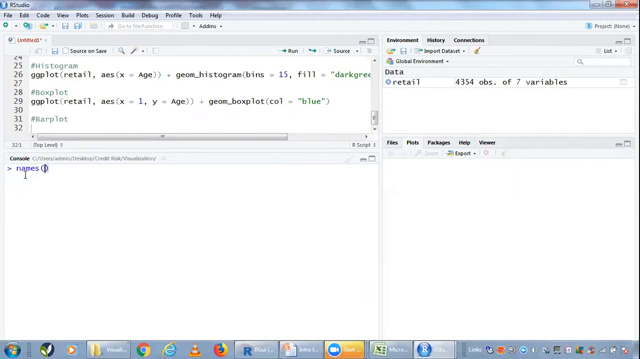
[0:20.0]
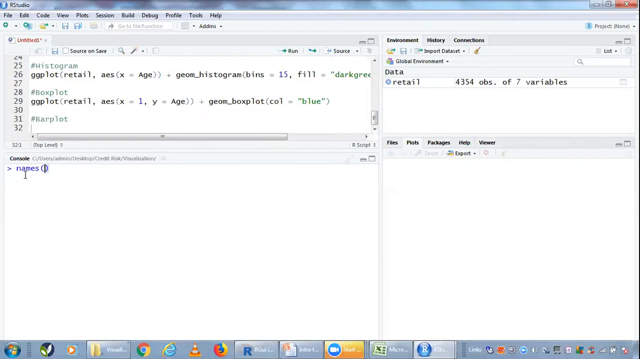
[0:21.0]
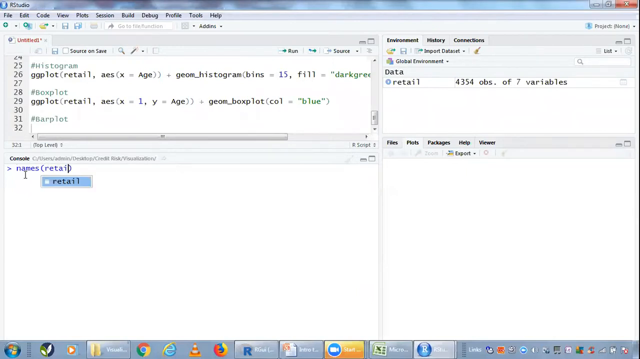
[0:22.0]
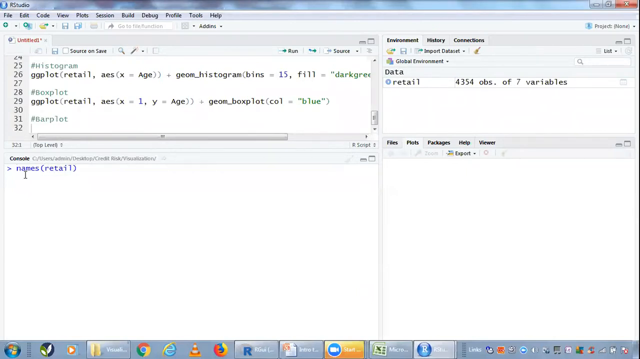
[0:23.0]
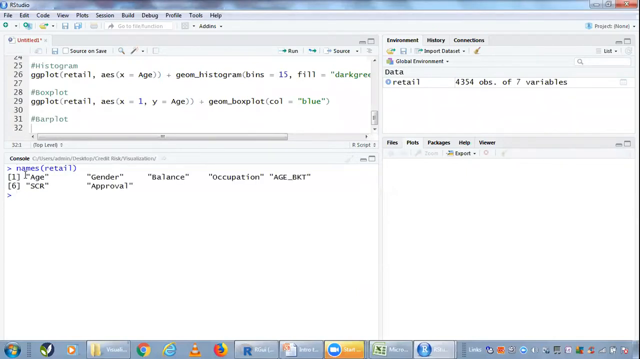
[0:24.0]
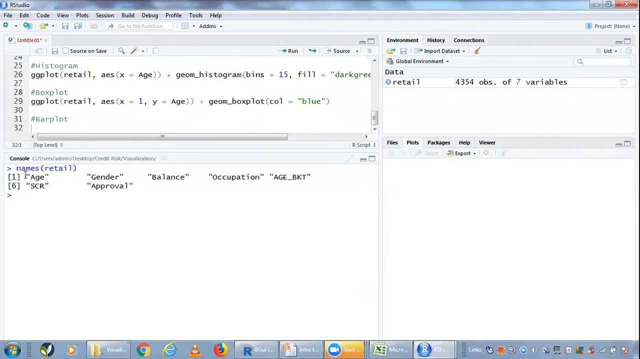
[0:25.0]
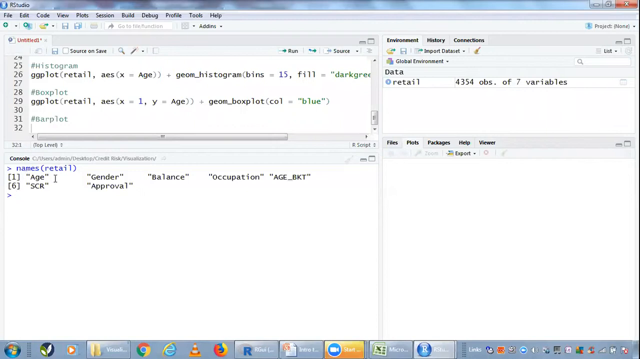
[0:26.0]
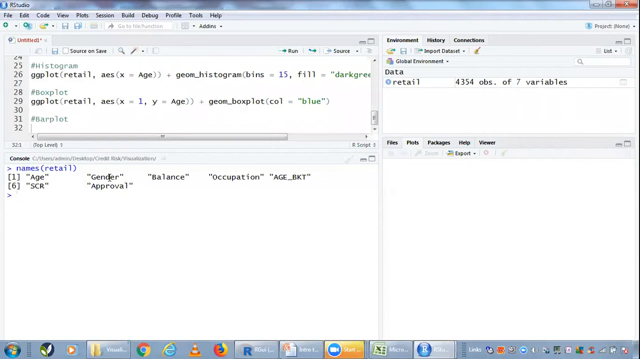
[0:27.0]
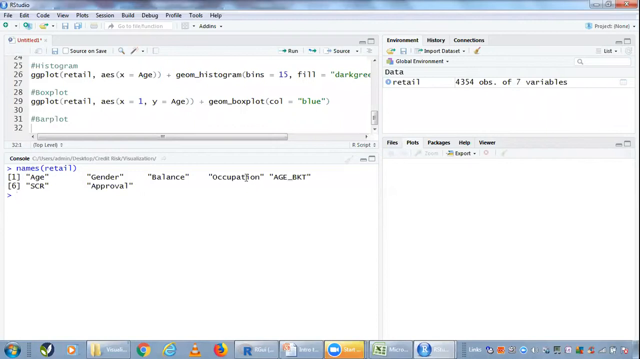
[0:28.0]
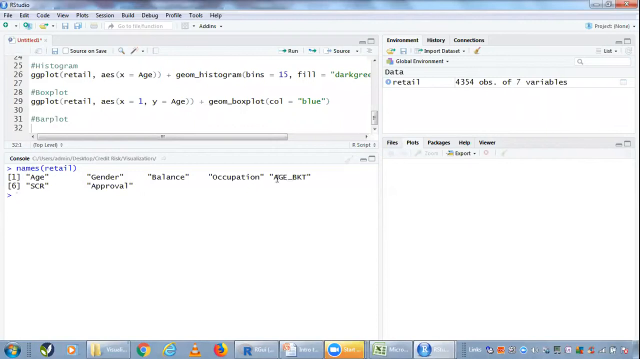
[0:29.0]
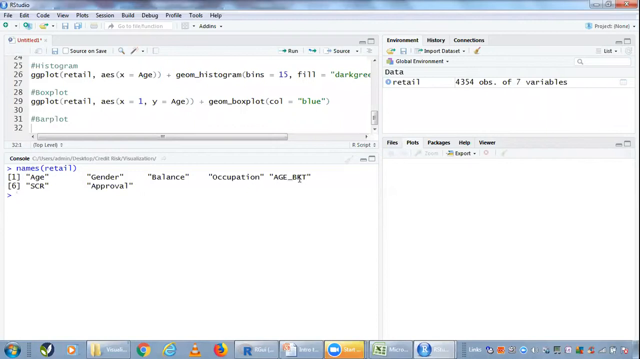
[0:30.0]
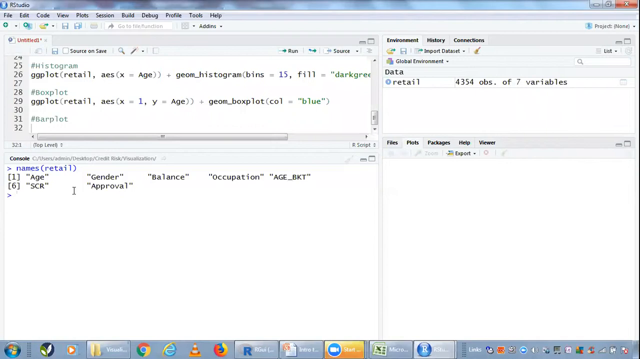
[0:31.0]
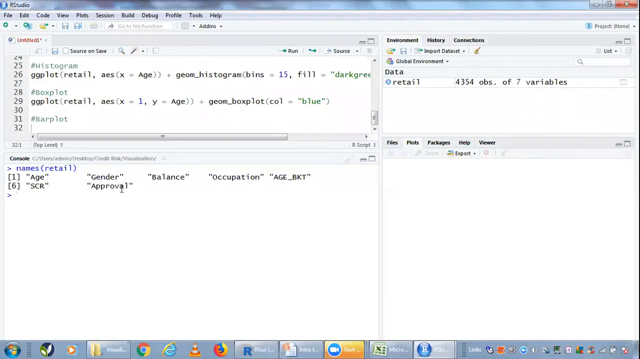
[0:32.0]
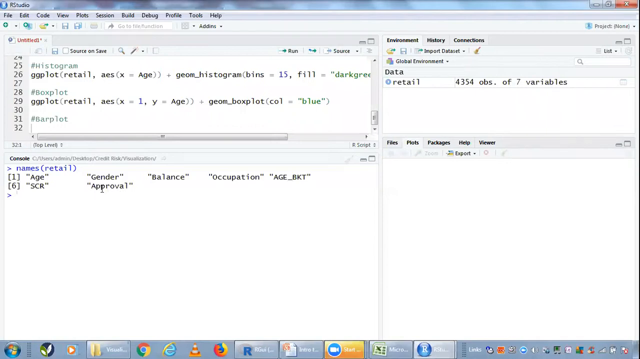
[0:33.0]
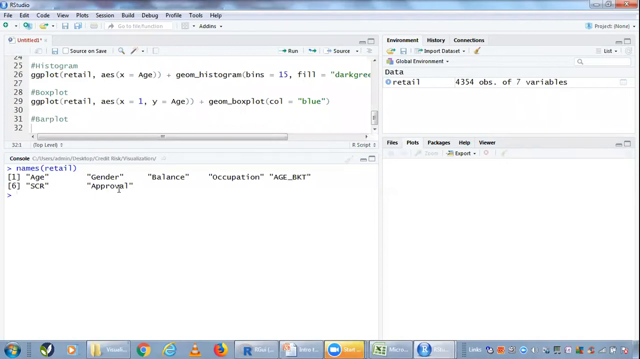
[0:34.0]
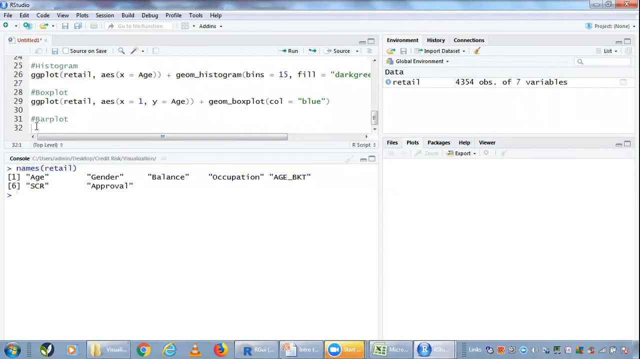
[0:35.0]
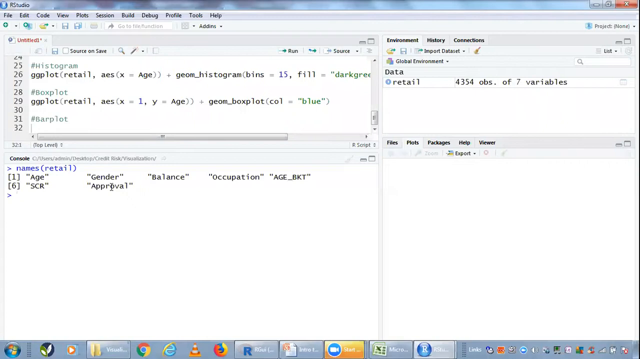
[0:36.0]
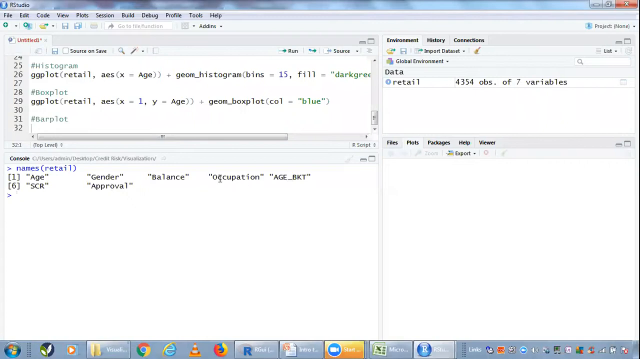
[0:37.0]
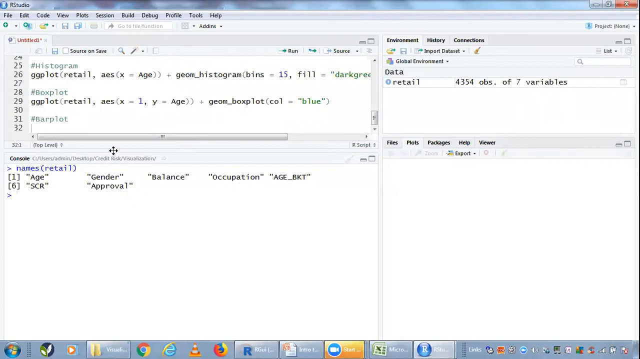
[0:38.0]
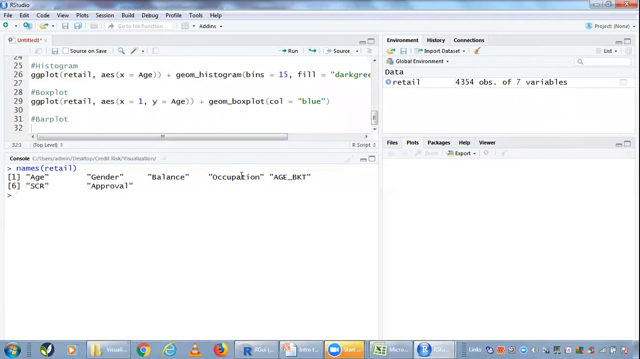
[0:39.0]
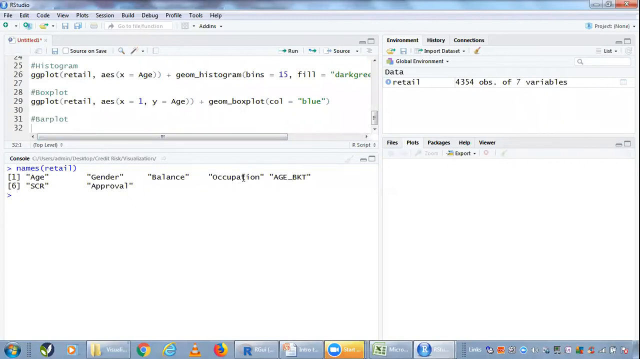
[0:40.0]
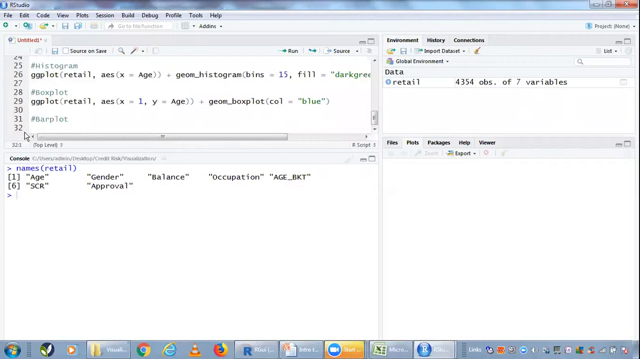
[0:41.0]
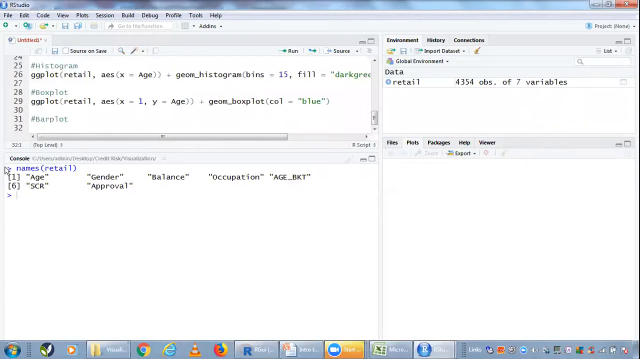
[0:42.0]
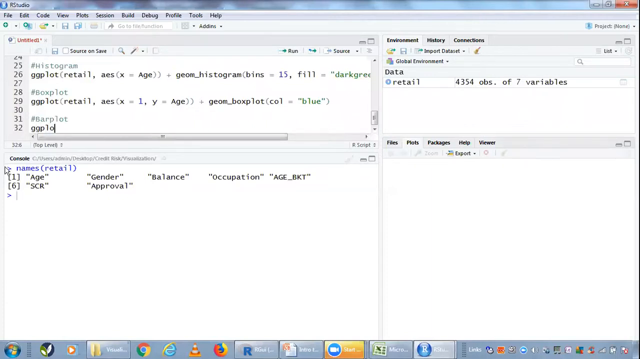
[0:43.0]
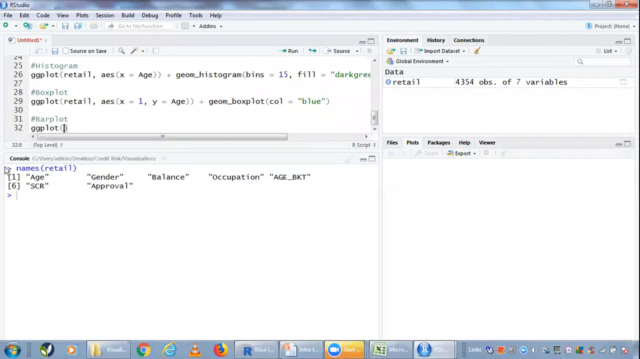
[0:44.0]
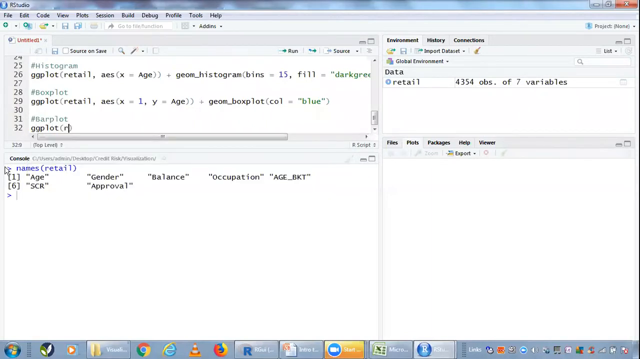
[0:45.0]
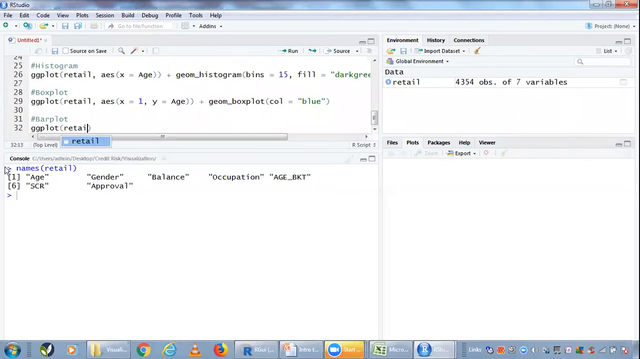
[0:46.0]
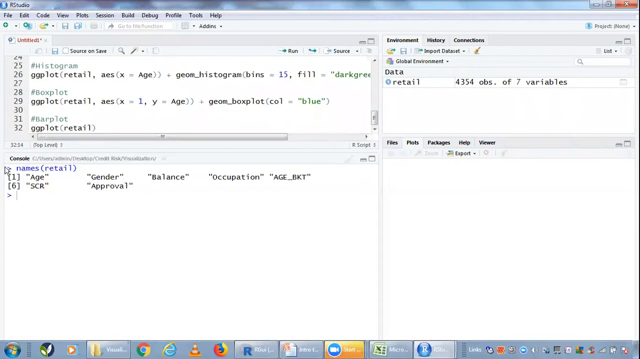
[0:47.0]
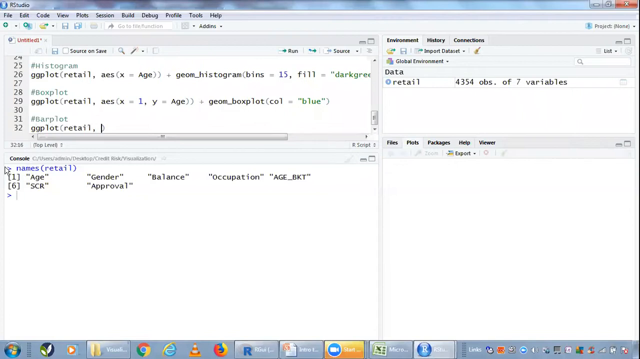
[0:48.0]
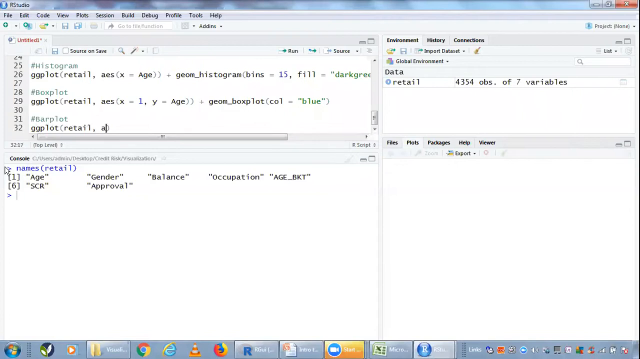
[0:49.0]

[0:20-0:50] In the RStudio IDE, with its four panels, the user types the word "retail" between the parentheses after "names" in the bottom left panel labeled "Console" at the top. They seem to press enter, and a list of options appears: a line with a 1 in brackets lists "age, gender, balance, occupation, age_BKT", and underneath it a line with a 6 in brackets lists "SCR" and "approval". The cursor hovers over the options, maybe as if the user is reading them off, spending a bit more time over "approval" and "occupation". The user then goes up to the Untitled panel at the top left and on line 32 types "ggplot(retail, aes)".